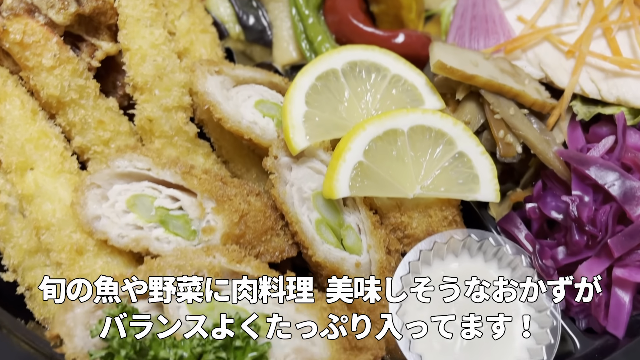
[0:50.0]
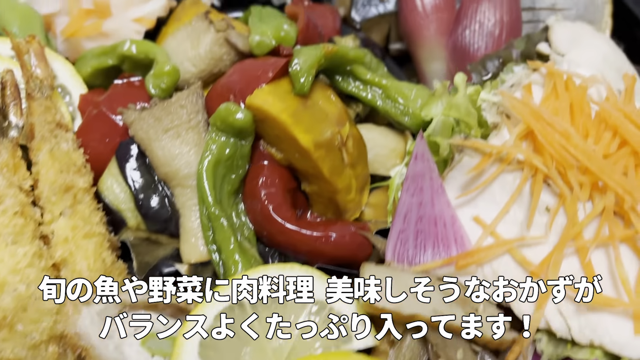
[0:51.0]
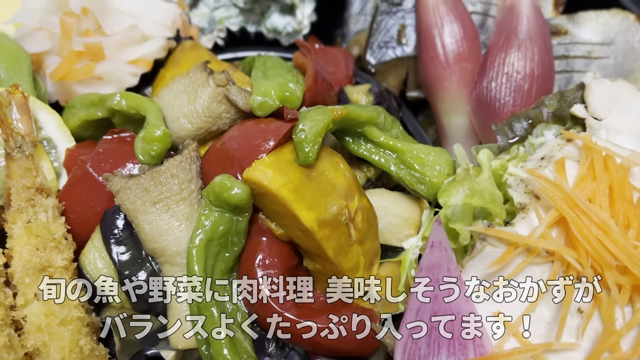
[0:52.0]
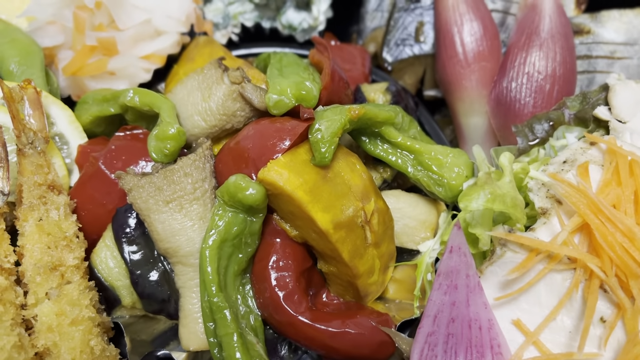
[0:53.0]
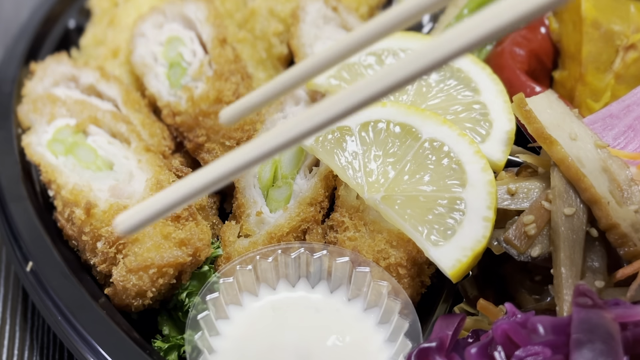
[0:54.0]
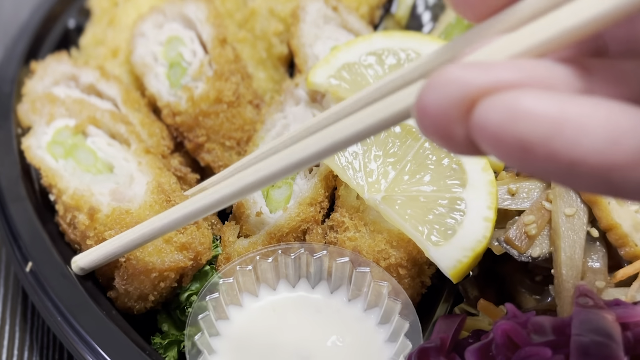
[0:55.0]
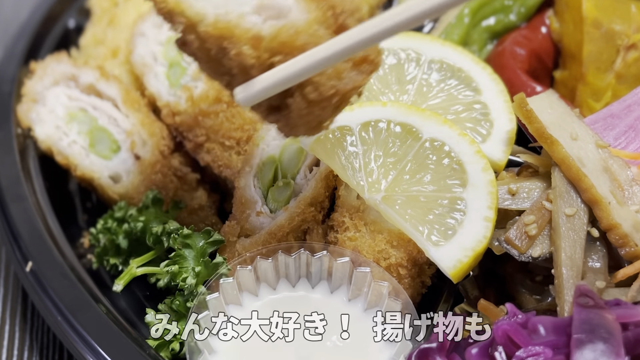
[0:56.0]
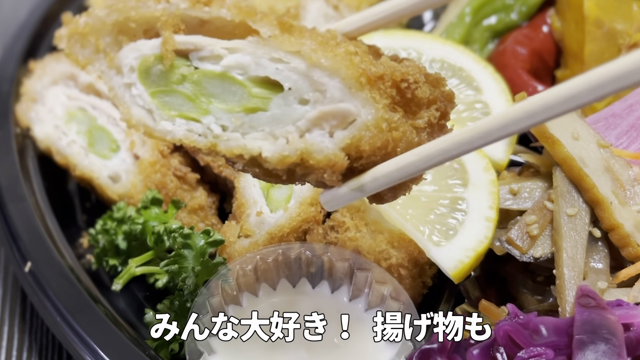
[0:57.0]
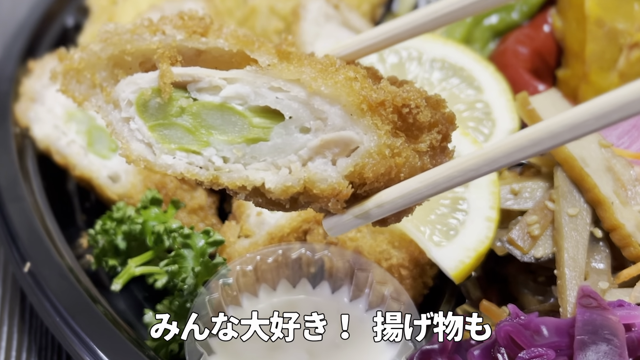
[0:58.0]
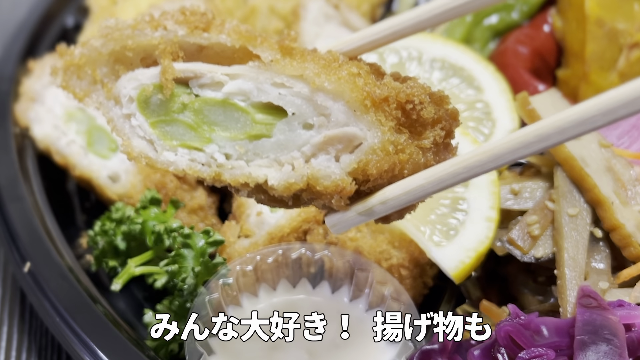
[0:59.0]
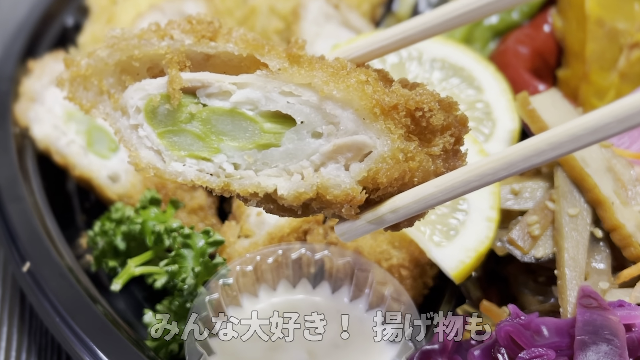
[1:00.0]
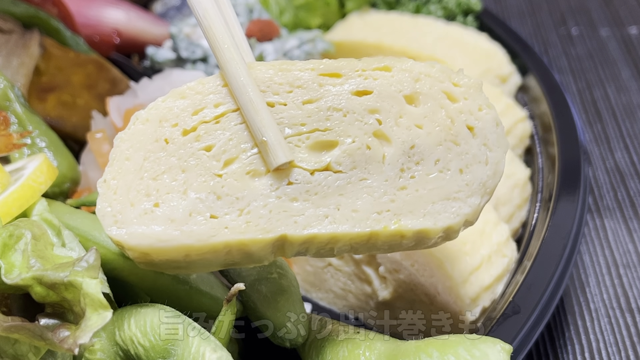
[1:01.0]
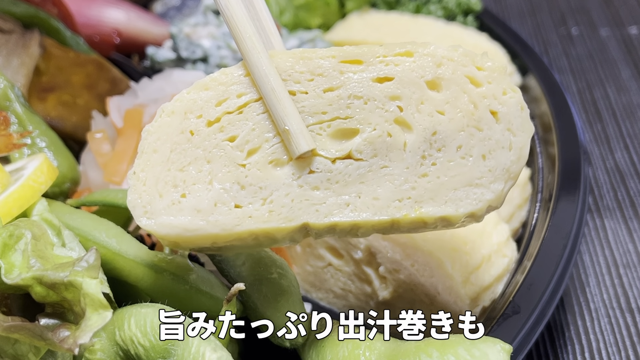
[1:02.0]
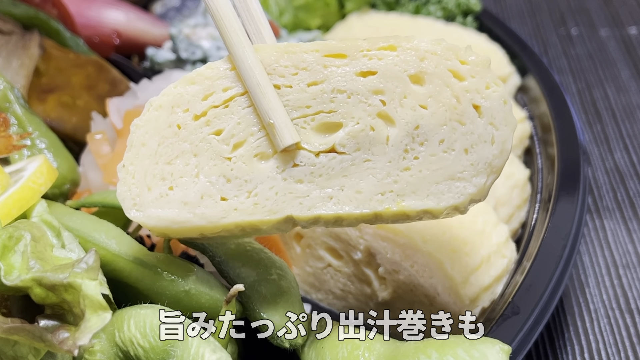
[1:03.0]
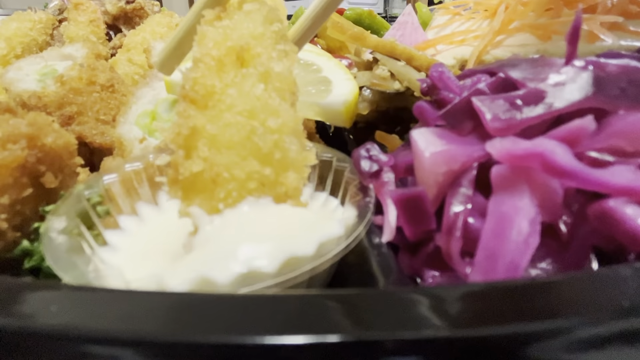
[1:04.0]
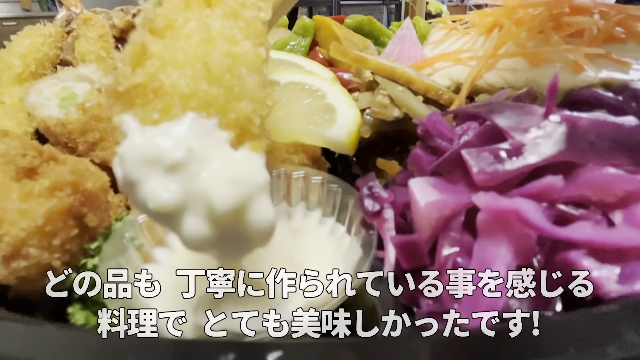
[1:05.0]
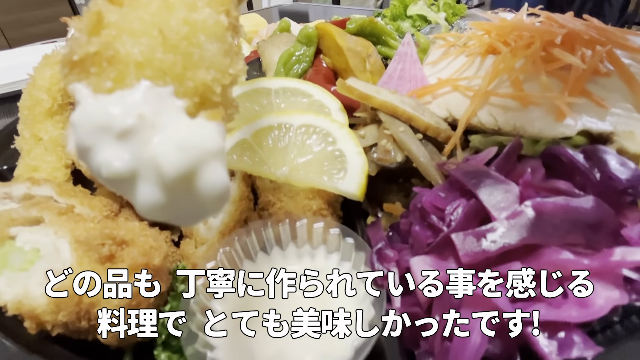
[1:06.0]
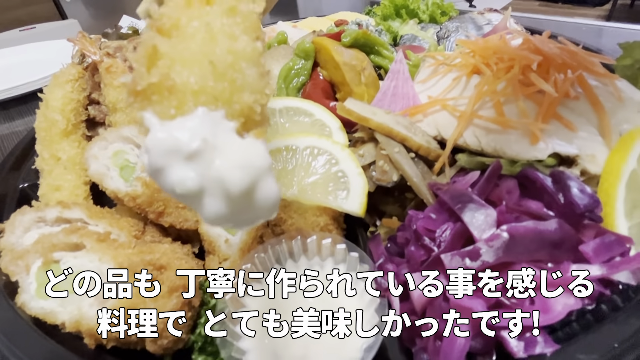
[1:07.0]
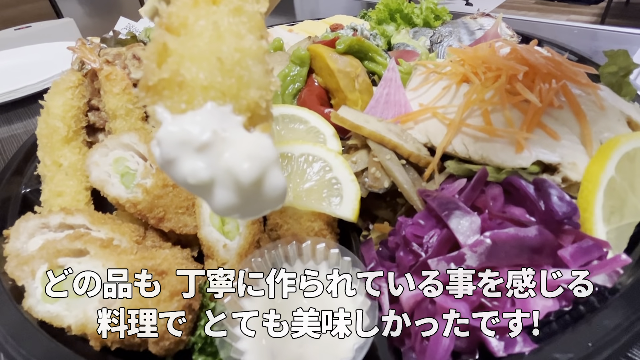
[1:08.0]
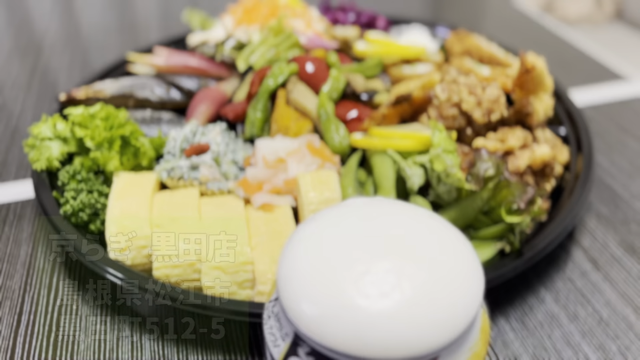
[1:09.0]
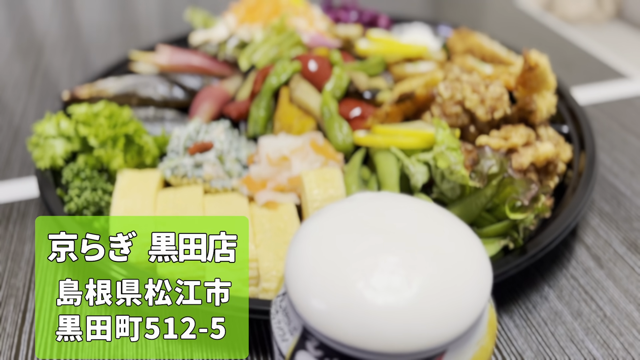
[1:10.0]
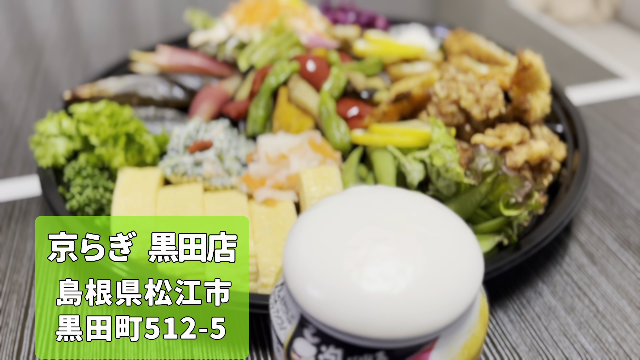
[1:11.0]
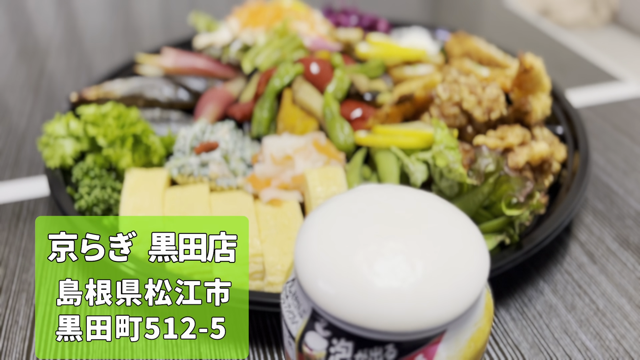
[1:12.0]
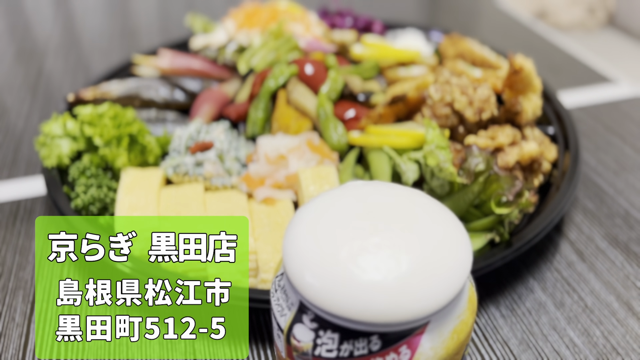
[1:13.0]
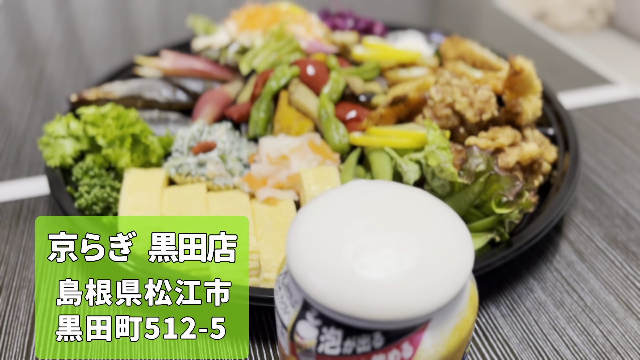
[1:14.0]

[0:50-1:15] The camera is still zooming in on the food. The video cuts to someone holding chopsticks and slowly picking up a piece of fried food that appears to have green vegetables in the middle. White text is still at the bottom of the screen. The camera cuts to another, unidentified piece of food that looks a bit moist. The video then cuts to the person holding a piece of shrimp with chopsticks and dipping it into what is possibly ranch. The video ends with a view of the dish, with the person holding chopsticks about to eat the Asian, Japanese or Chinese dish, and white text on the left.